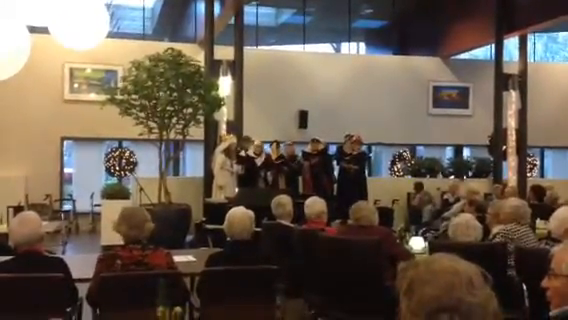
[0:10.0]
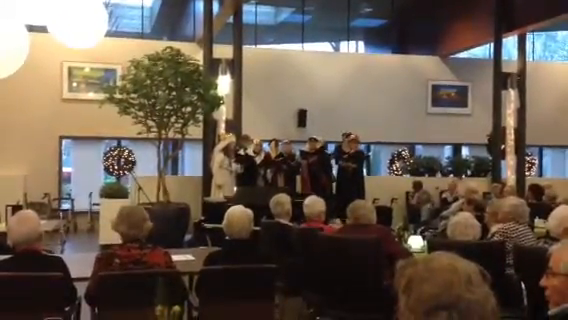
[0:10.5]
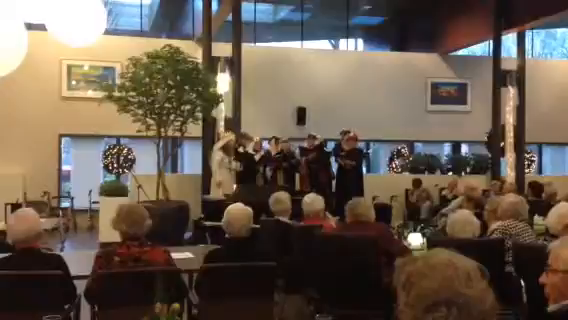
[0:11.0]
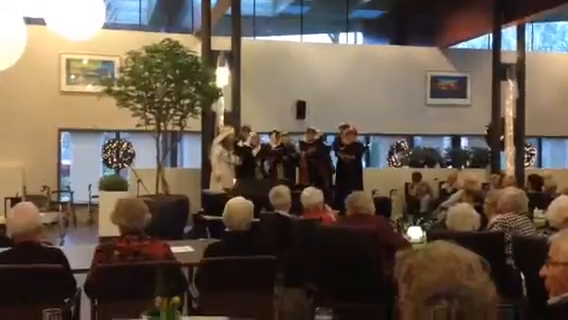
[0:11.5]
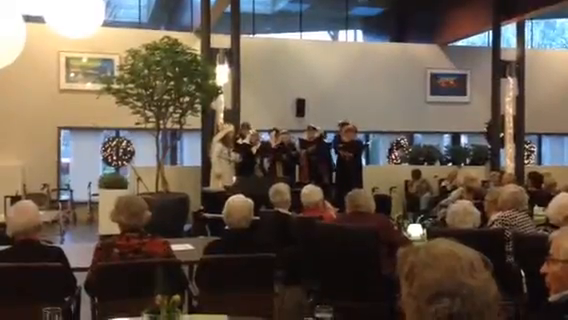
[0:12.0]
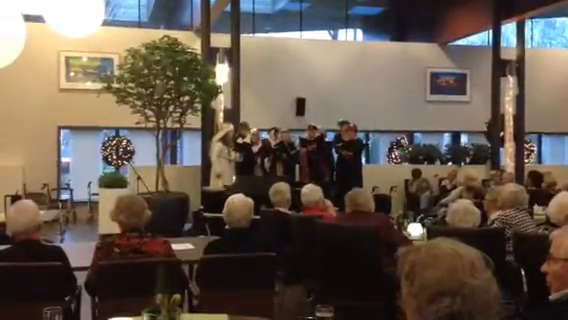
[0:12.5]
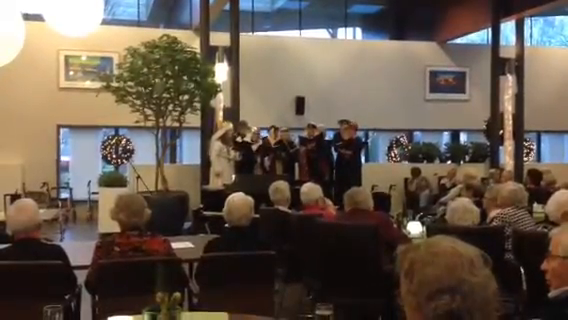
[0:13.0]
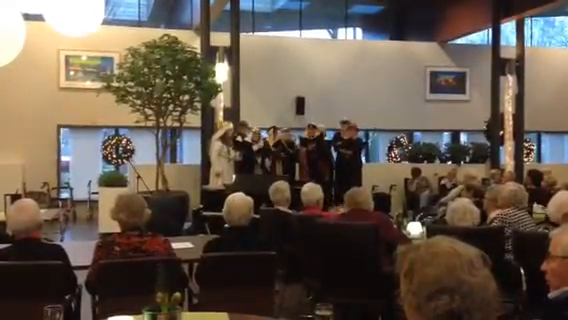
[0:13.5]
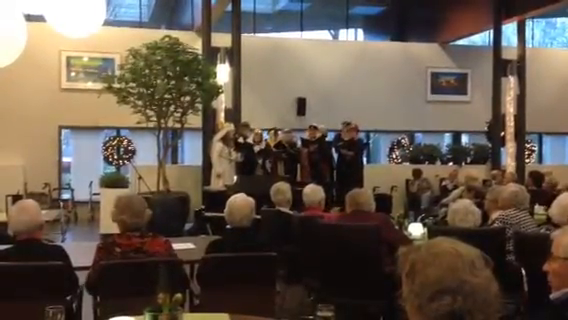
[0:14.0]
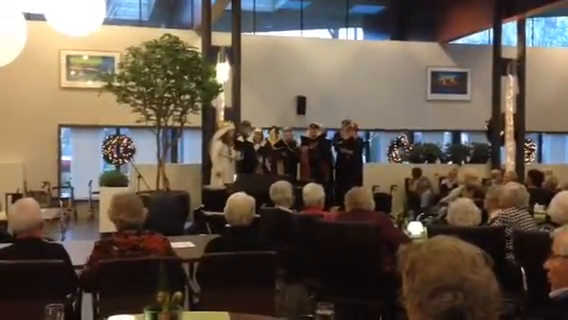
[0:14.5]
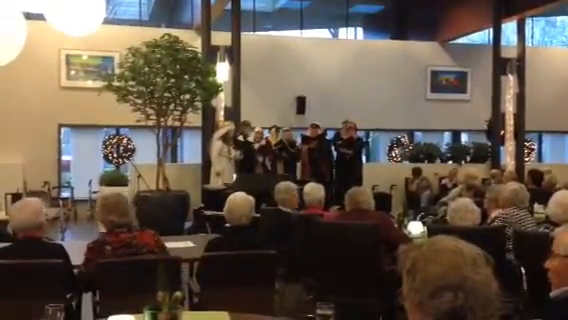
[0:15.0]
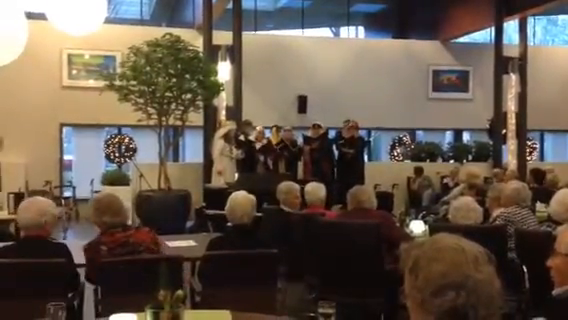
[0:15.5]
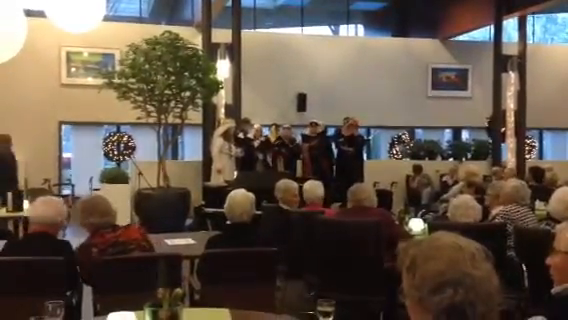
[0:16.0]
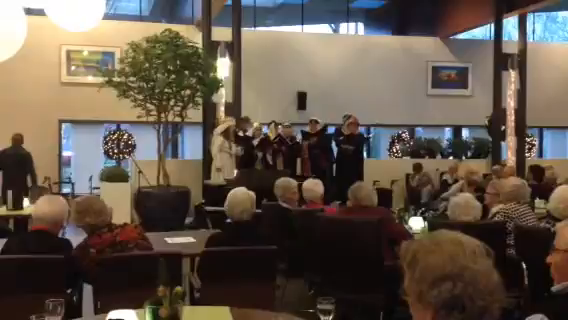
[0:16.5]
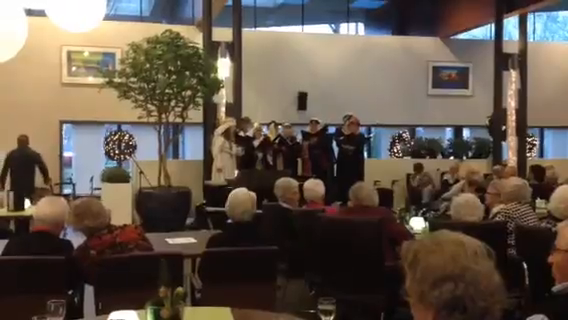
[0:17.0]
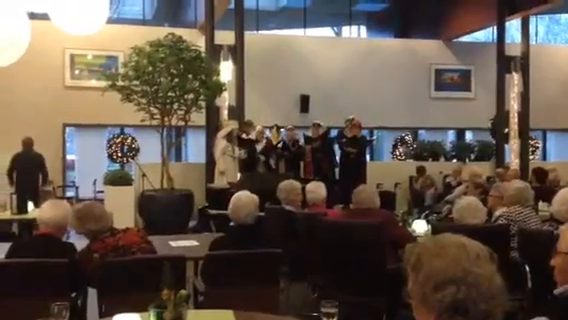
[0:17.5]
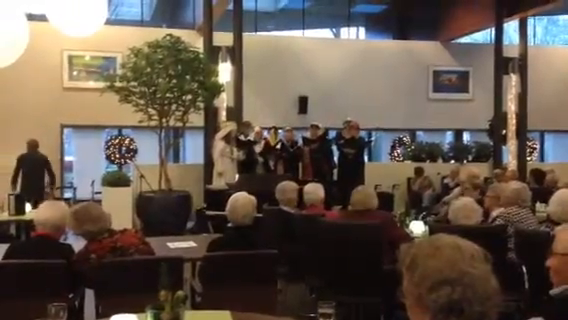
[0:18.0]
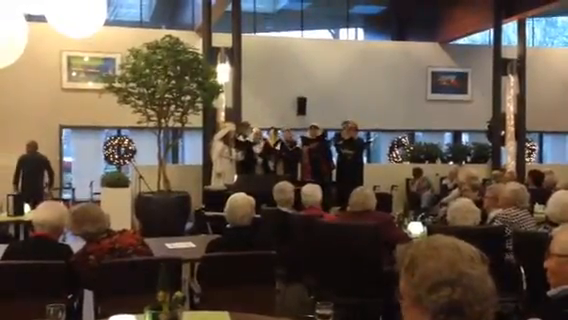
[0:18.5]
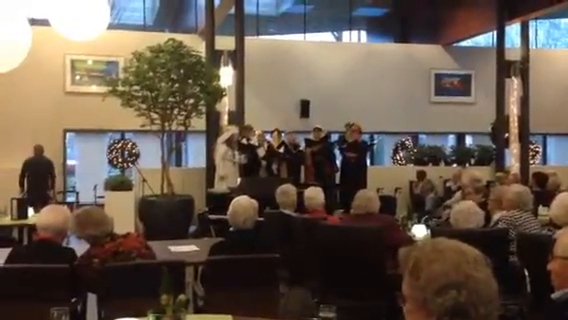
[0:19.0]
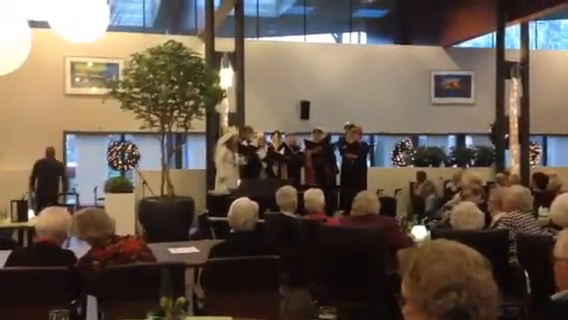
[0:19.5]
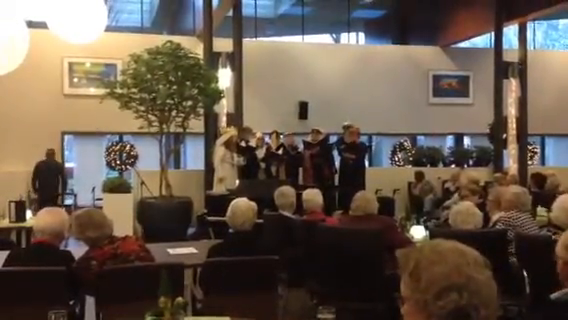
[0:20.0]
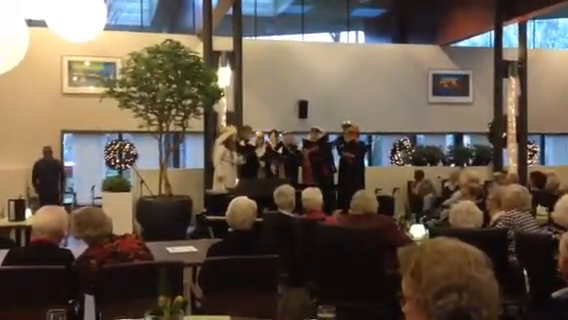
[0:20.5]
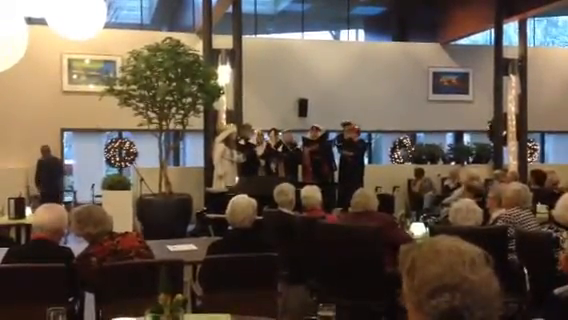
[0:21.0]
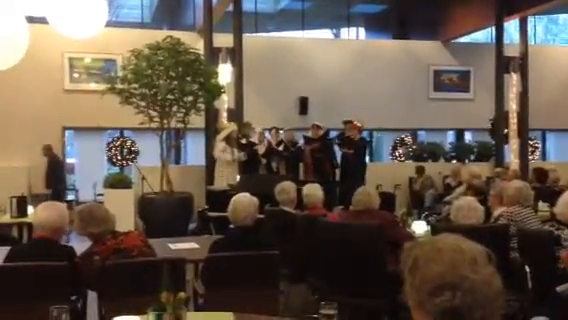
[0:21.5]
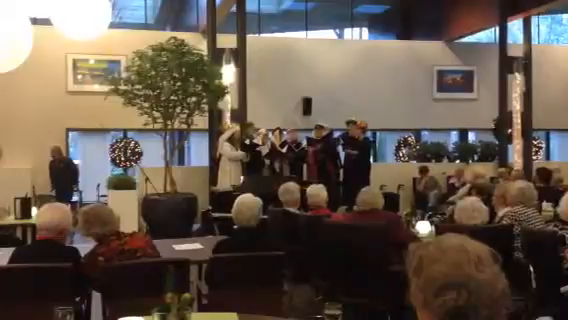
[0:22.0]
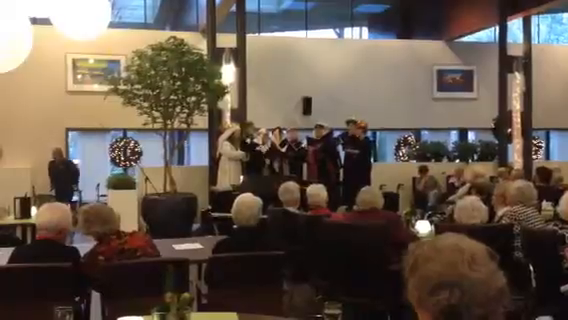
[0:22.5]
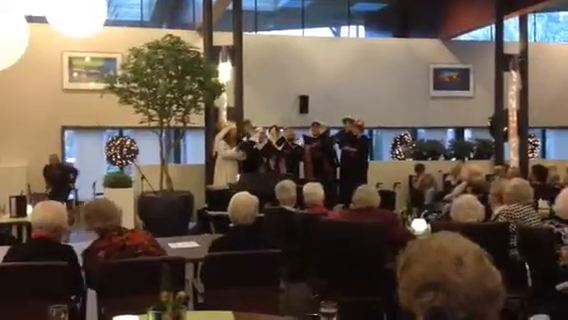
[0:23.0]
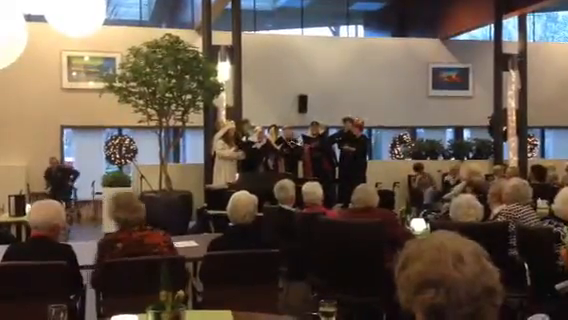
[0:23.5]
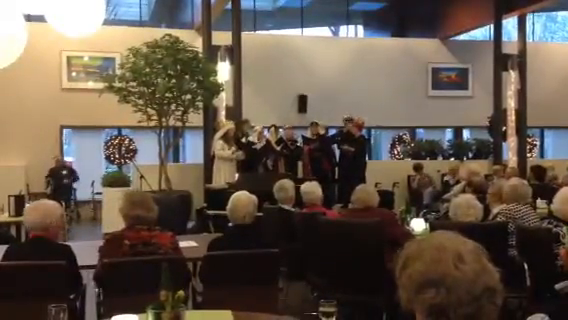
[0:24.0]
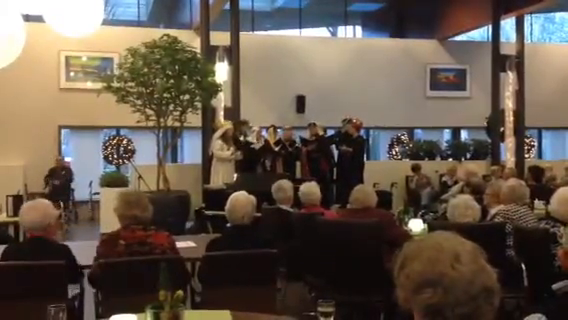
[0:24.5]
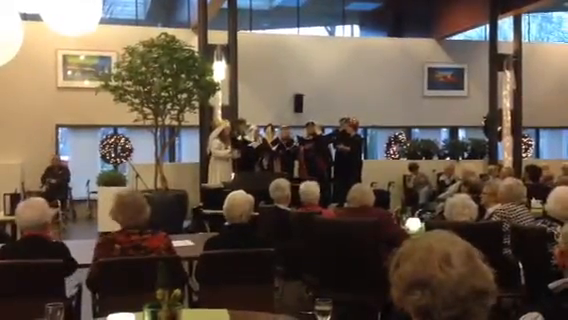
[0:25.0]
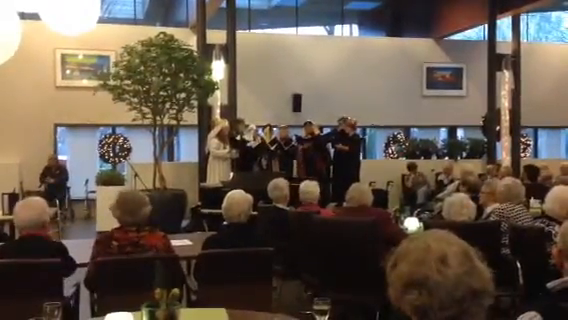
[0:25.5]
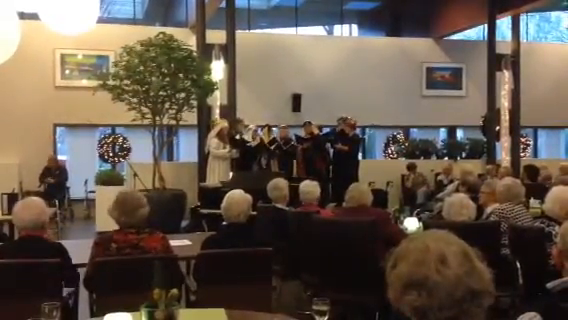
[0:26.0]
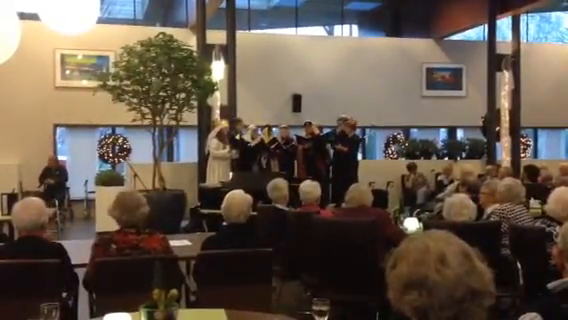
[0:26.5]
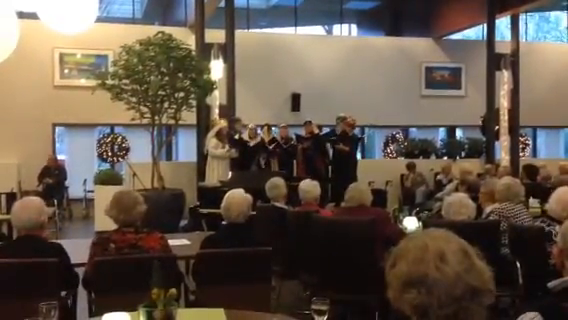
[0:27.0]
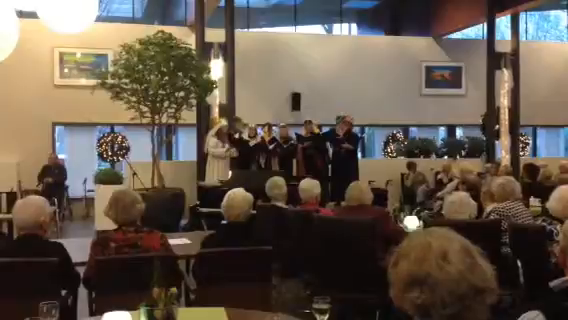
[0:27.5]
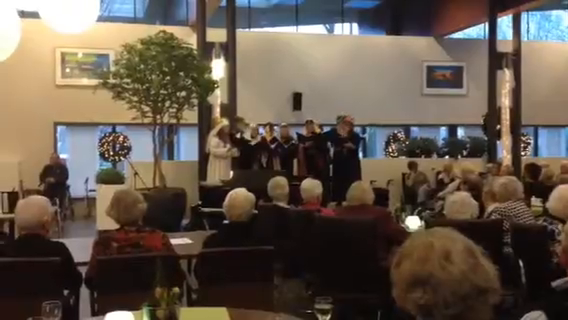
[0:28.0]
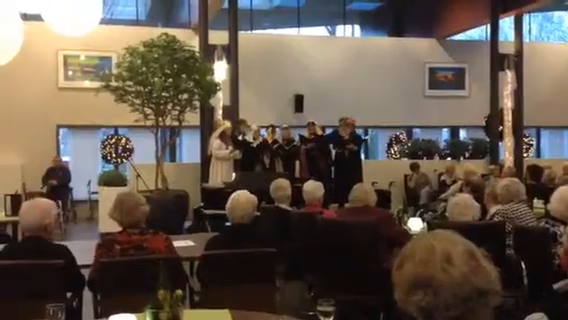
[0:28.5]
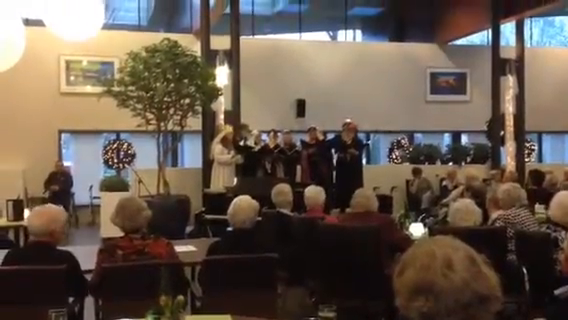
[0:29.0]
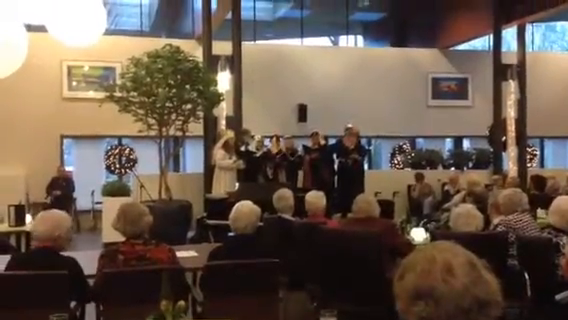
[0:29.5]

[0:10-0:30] Most of the people on stage in the indoor performance wear dark, long clothing, perhaps religious. They all also appear to be wearing something on their heads, though from the distance it is hard to make out what it is. One person in the group on the platform wears a long, white, long-sleeved dress and a white covering over her head. The performance may be singing, or it could perhaps be a narrative. No musical instruments are in view. The camera pans slightly to take a slightly closer look at the elderly audience, who are all watching the individuals perform up on stage. Behind the performers, against a white wall, are a couple of fairly large color pictures in picture frames.